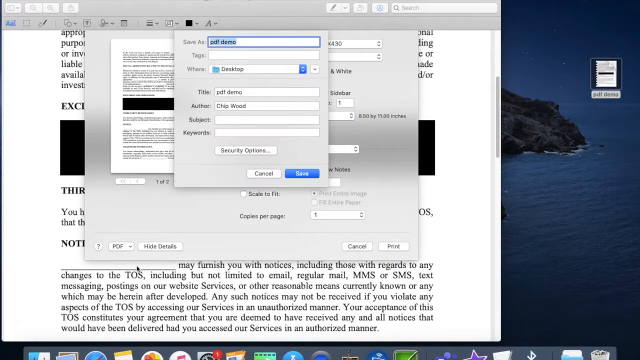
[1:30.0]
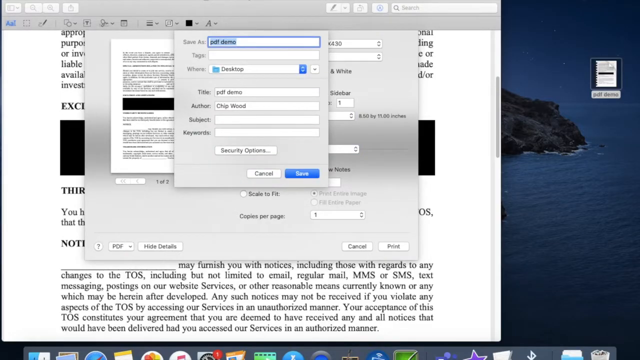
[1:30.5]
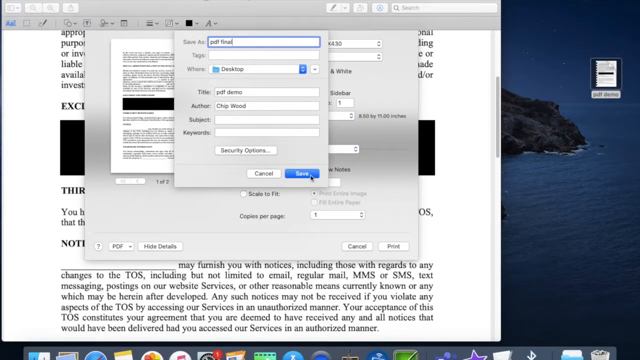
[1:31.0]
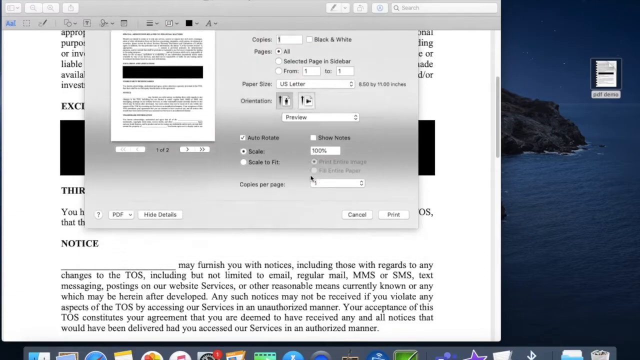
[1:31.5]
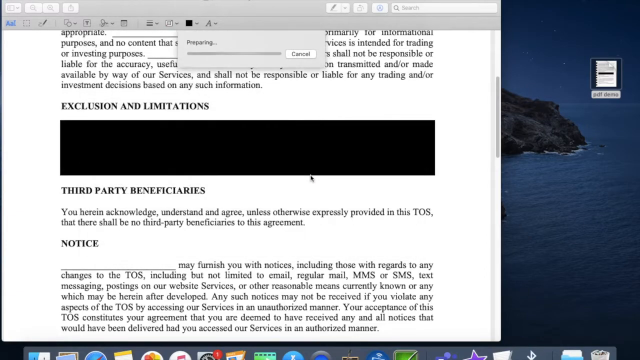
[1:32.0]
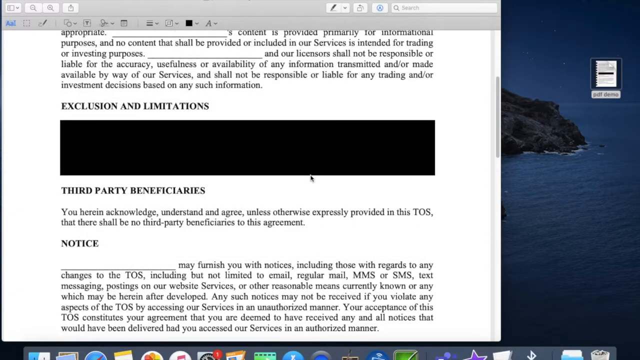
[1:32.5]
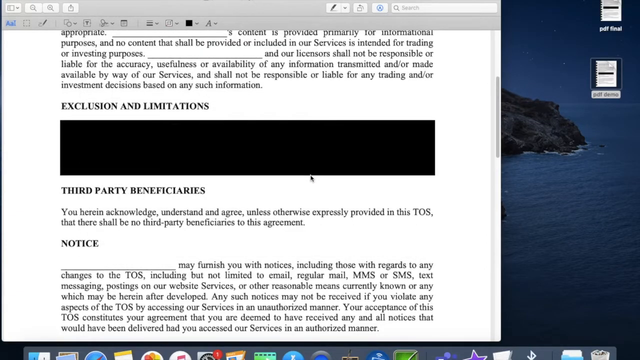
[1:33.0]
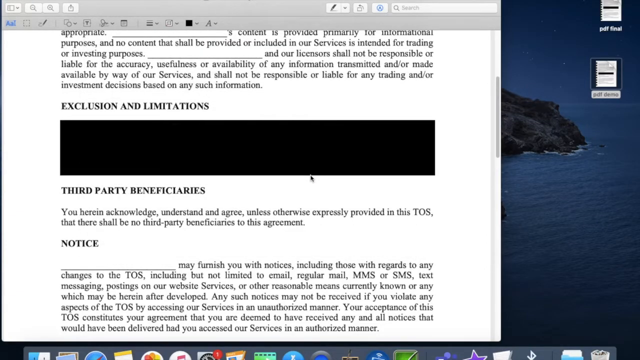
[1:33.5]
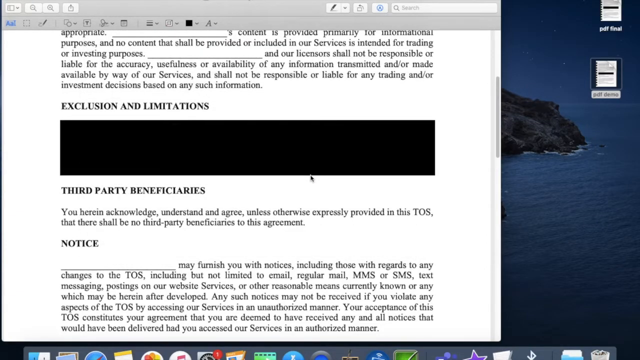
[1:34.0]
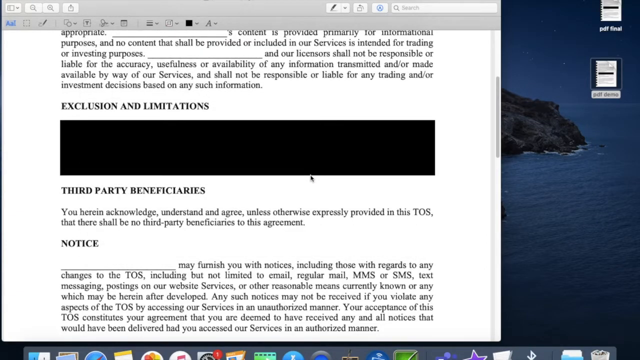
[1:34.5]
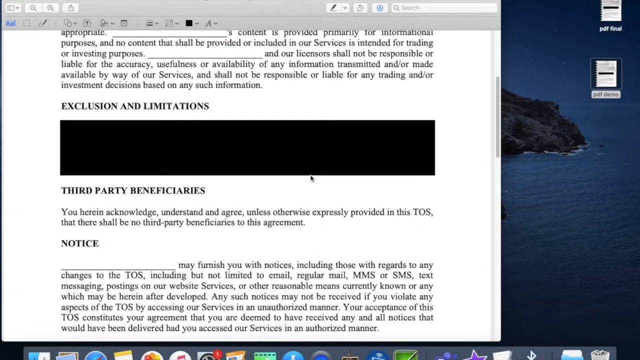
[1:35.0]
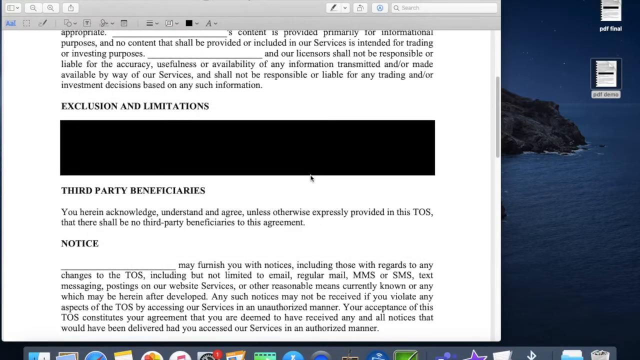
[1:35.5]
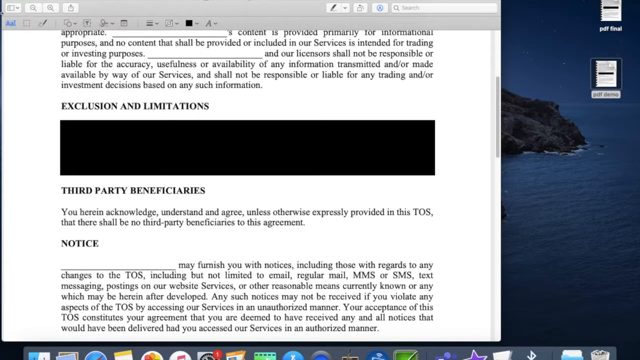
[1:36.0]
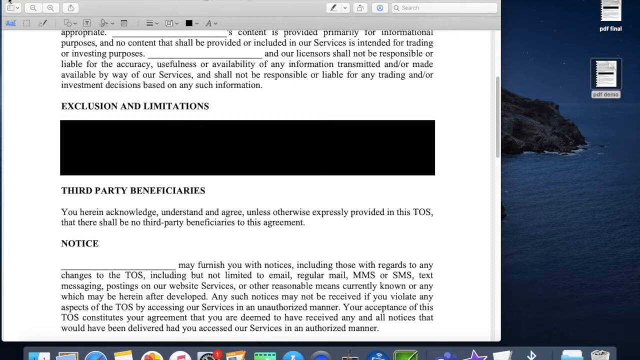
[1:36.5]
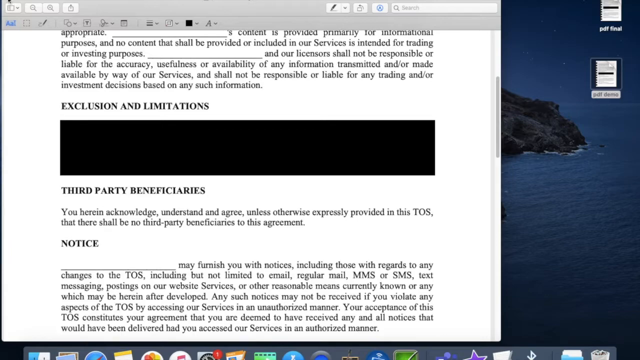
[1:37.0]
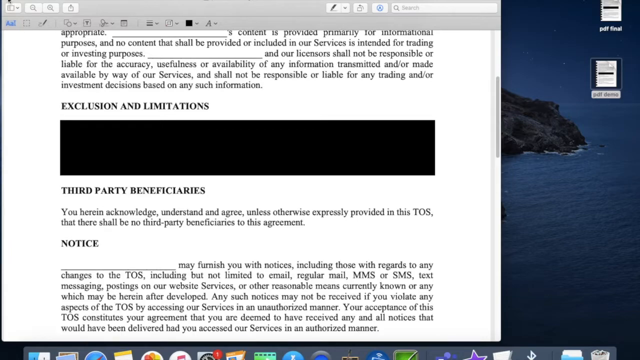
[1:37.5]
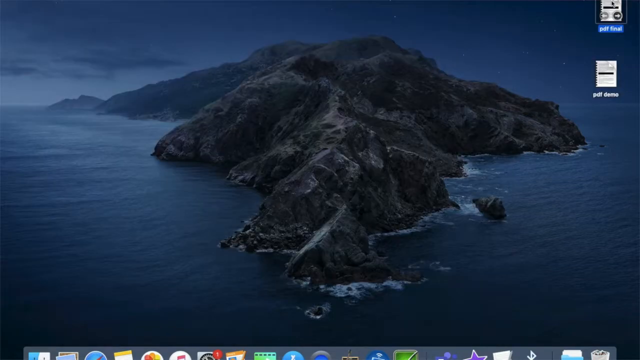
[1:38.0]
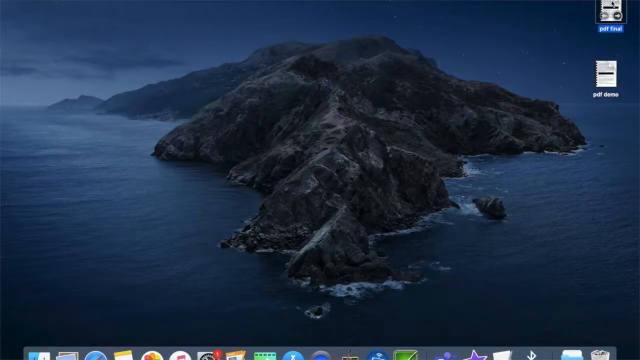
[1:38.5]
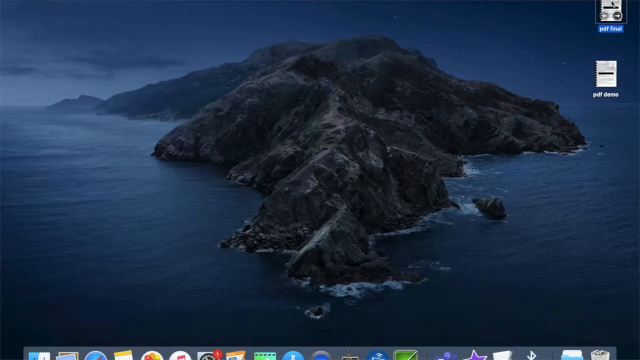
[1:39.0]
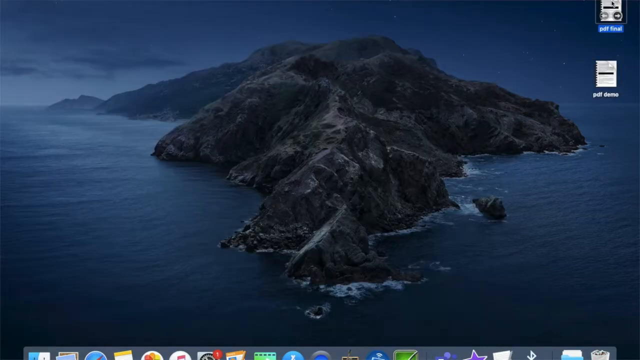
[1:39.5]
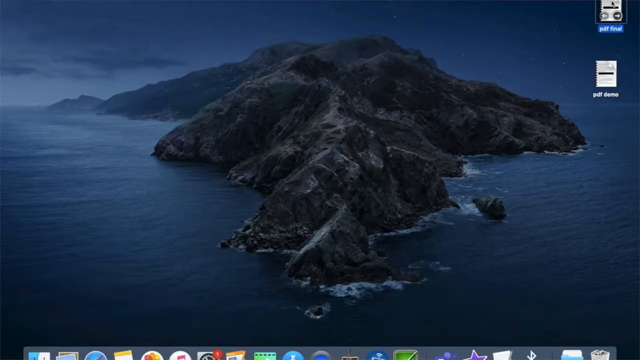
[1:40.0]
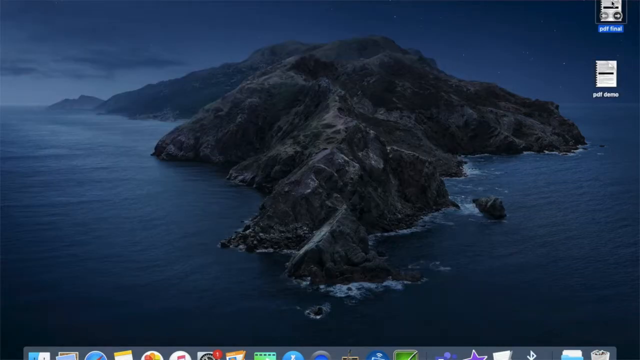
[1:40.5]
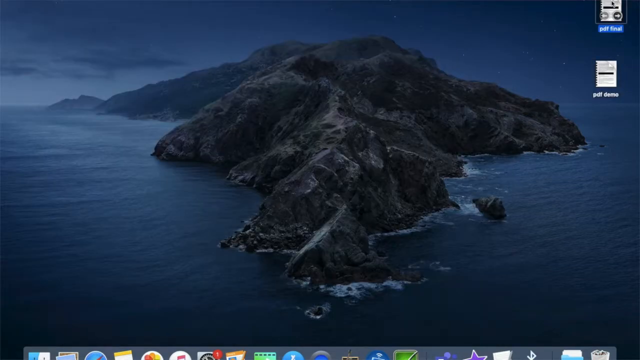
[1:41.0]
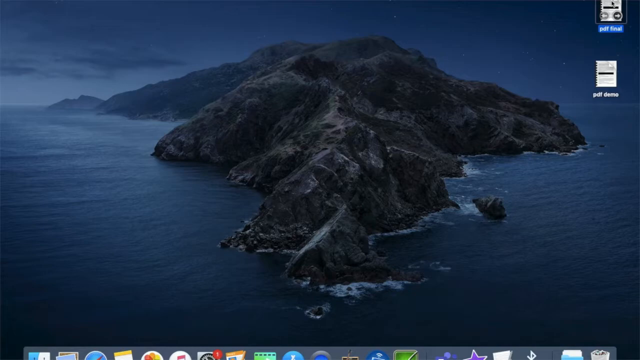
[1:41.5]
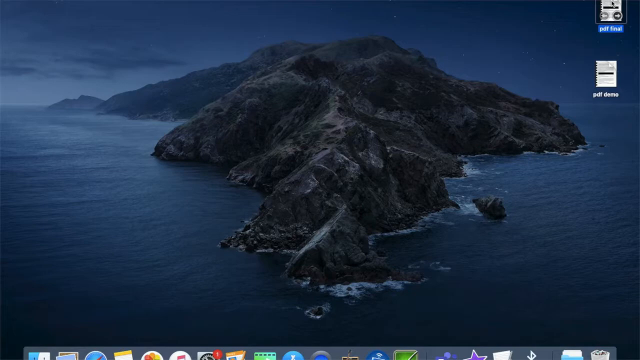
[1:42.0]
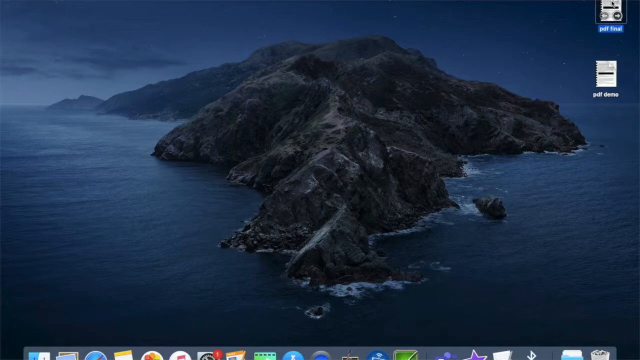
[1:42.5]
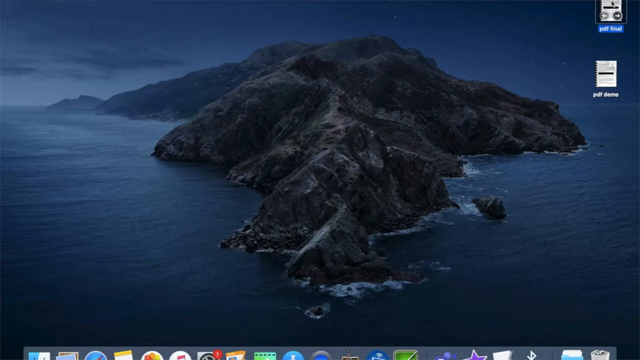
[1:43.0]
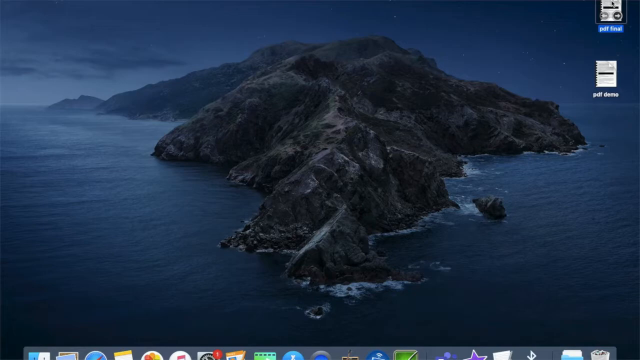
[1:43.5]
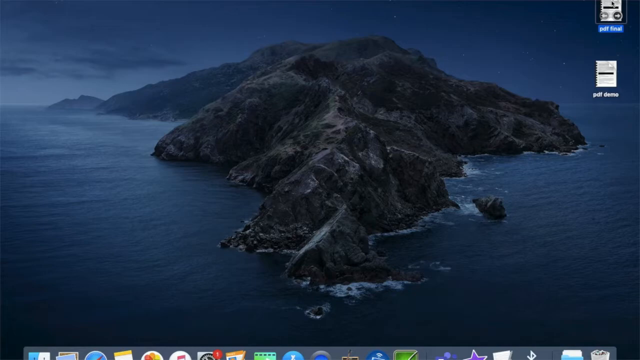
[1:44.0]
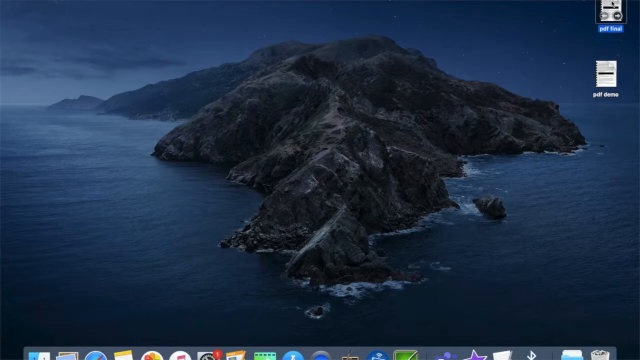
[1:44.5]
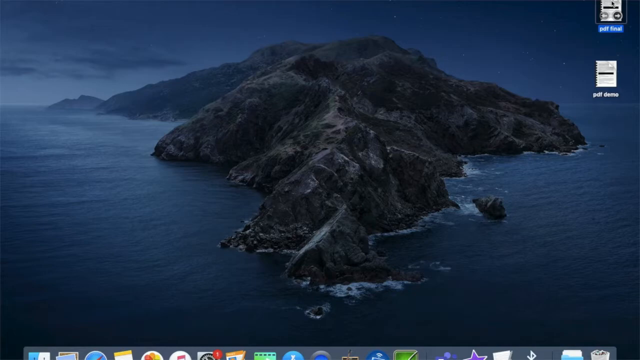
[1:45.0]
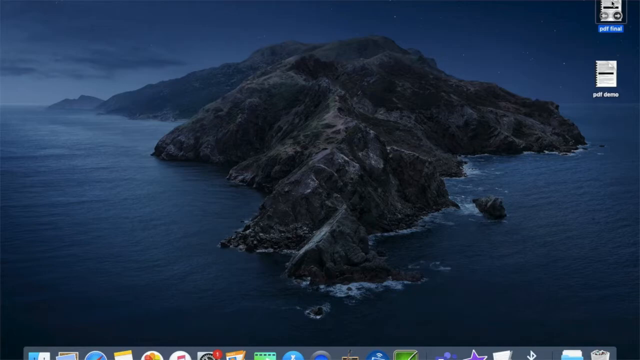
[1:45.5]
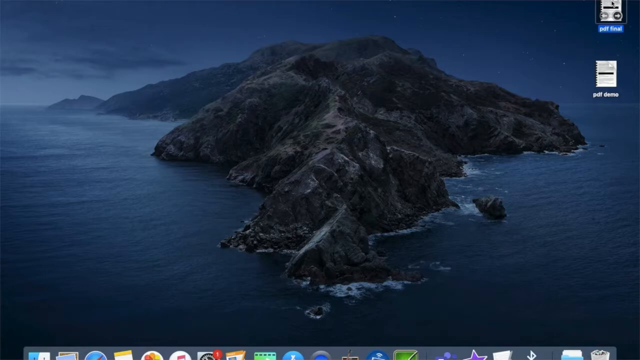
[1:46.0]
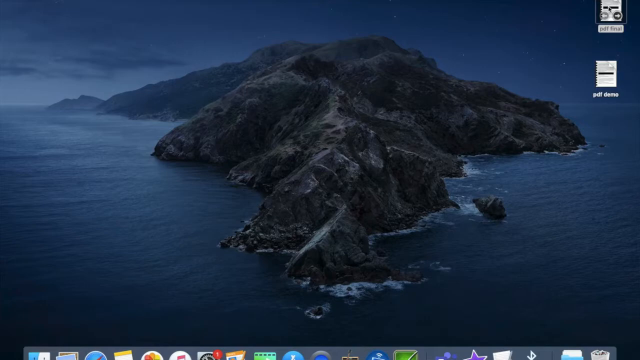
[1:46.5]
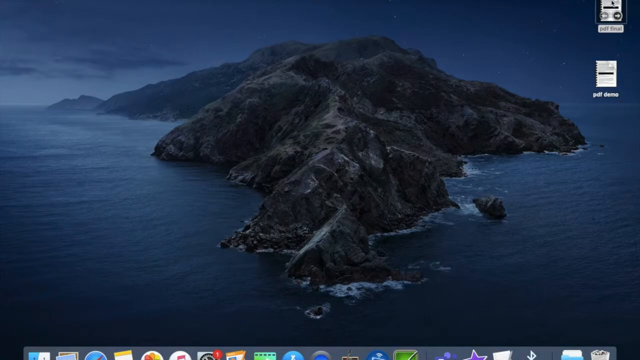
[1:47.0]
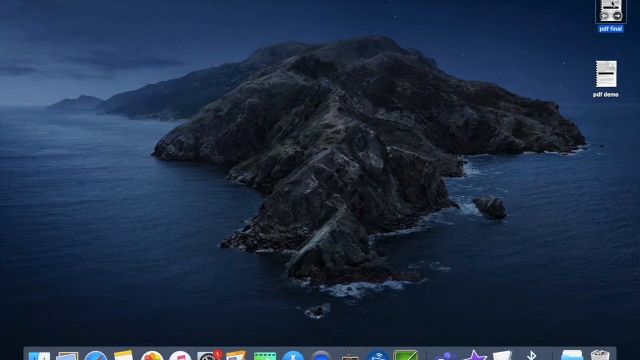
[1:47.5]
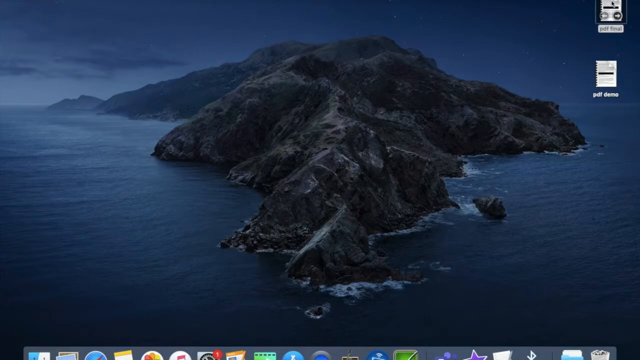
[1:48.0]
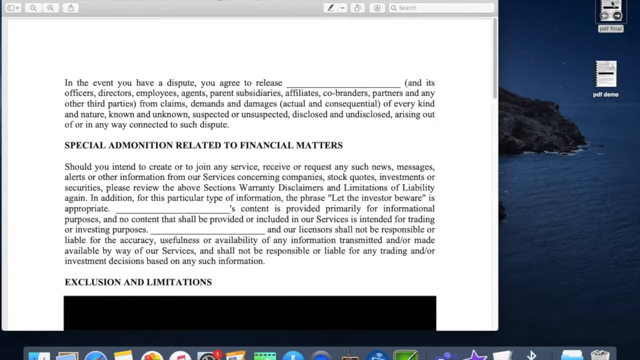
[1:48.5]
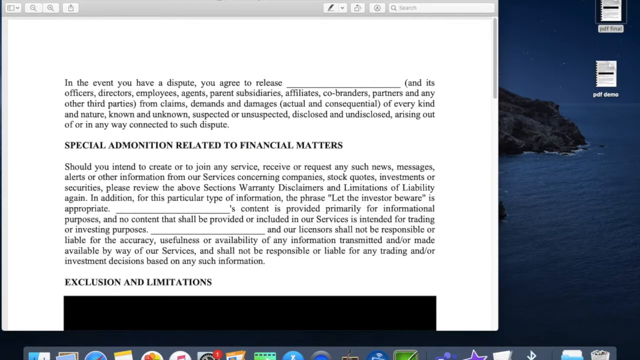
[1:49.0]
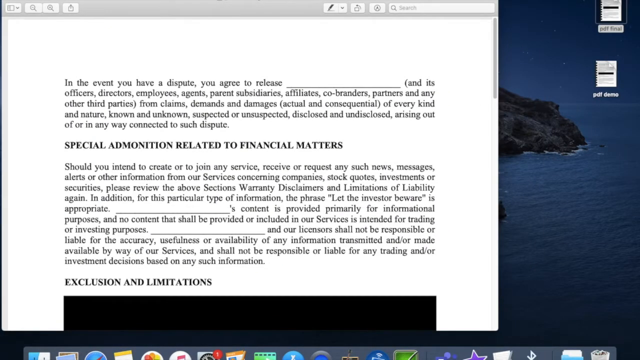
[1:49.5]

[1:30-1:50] A laptop or computer screen shows a Windows-type application. At the bottom is a white PDF document with black writing; above it is a print screen, and above that a small rectangle where the file is being saved as "PDF demo". The boxes disappear and the PDF document is visible again, with a cursor moving around the screen. The screen then changes to a picture of a rocky, rugged island with no vegetation in the middle of the ocean. Small icons that look like PDF documents are on the right-hand side of the screen. The cursor clicks one of them, and the PDF document enlarges onto the screen again, showing its white background and black writing.